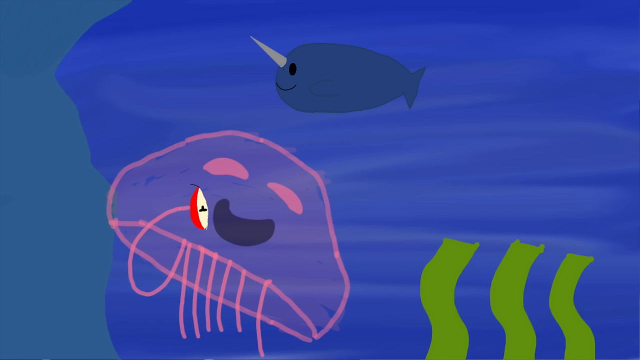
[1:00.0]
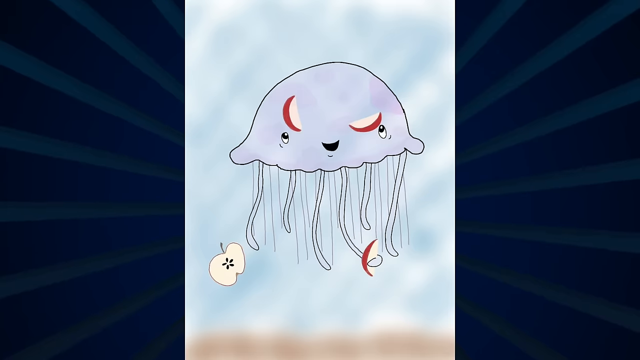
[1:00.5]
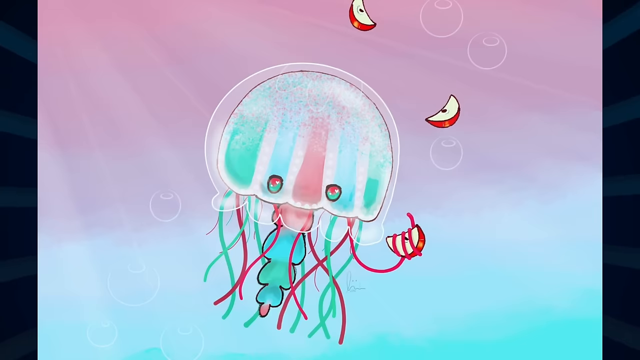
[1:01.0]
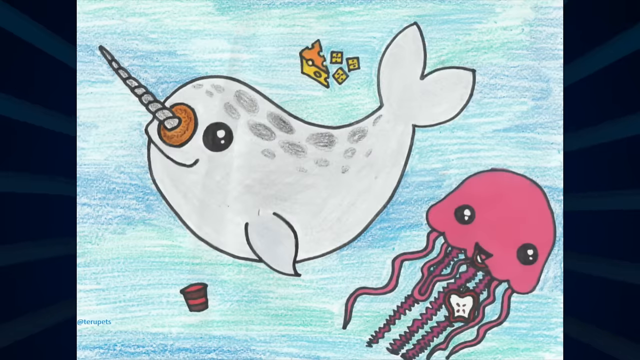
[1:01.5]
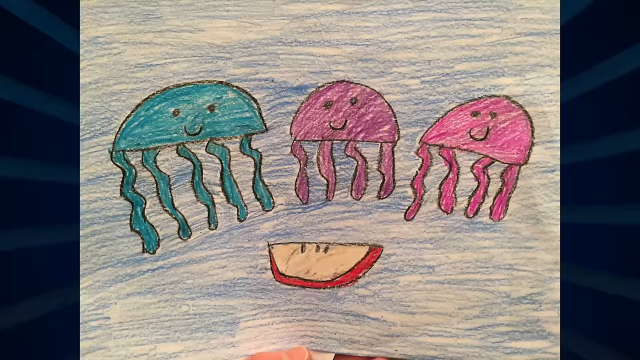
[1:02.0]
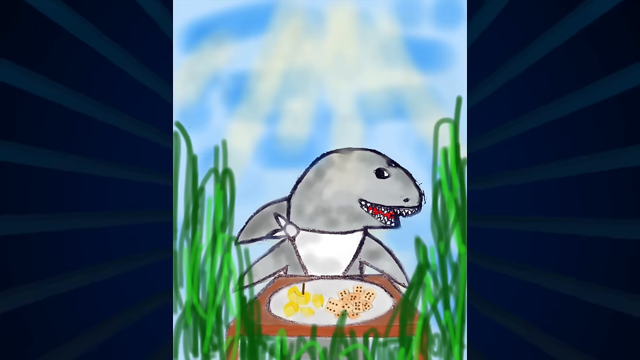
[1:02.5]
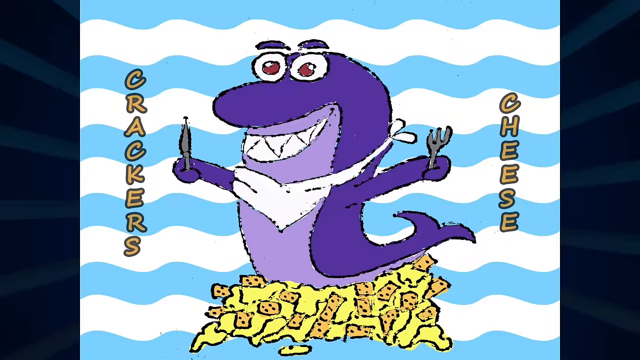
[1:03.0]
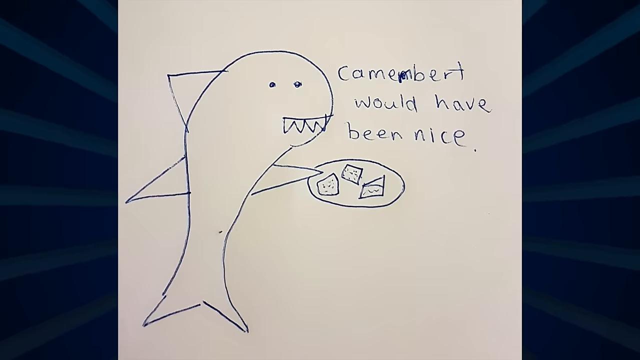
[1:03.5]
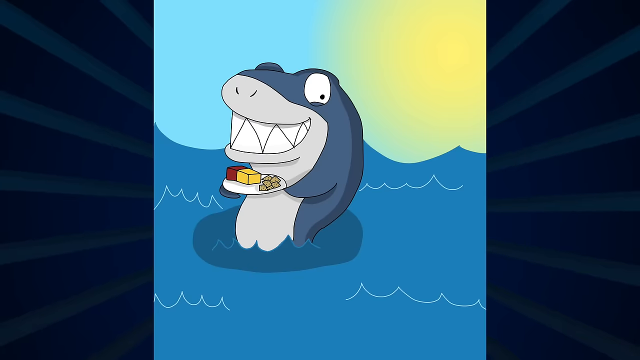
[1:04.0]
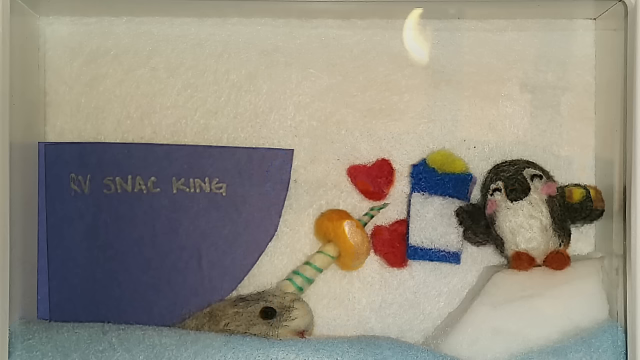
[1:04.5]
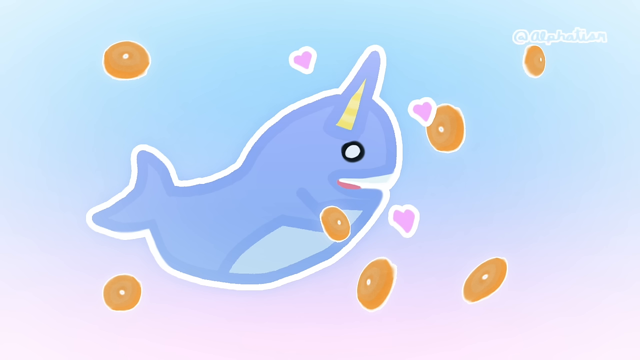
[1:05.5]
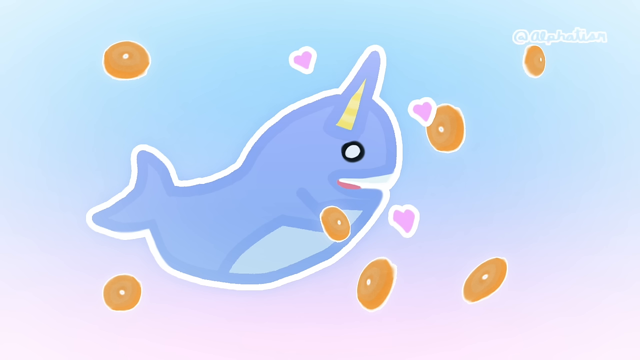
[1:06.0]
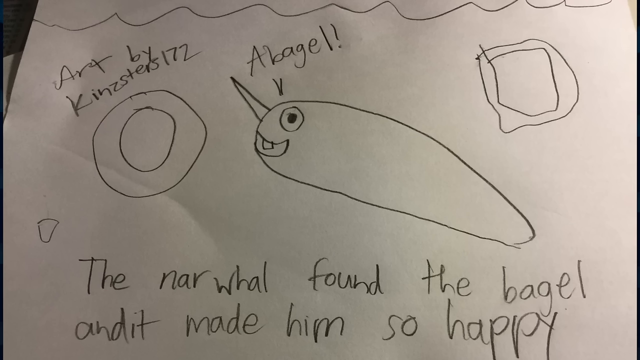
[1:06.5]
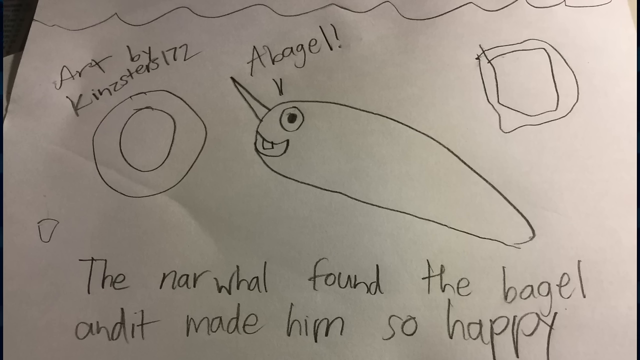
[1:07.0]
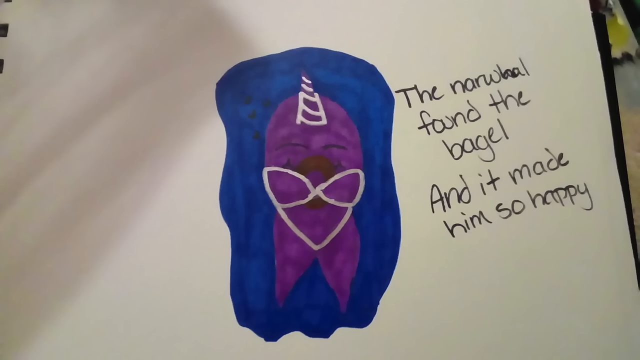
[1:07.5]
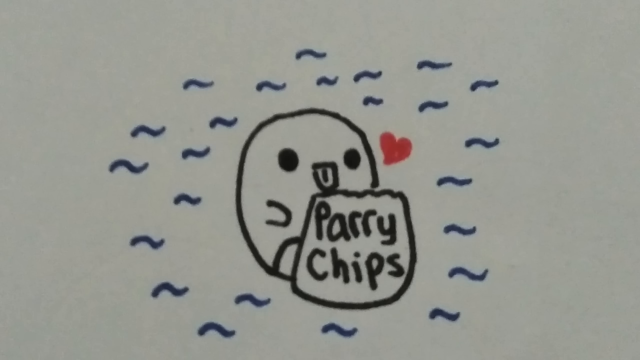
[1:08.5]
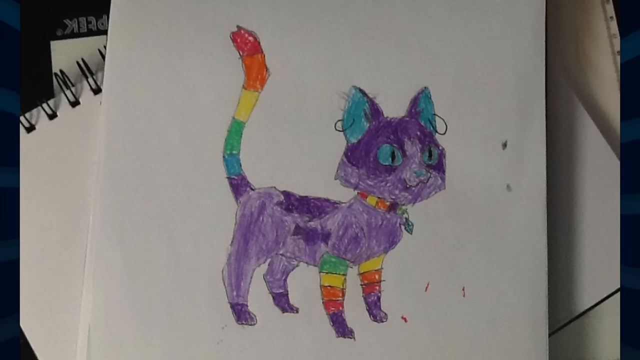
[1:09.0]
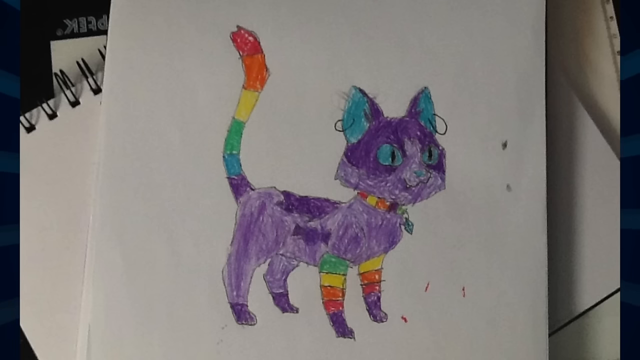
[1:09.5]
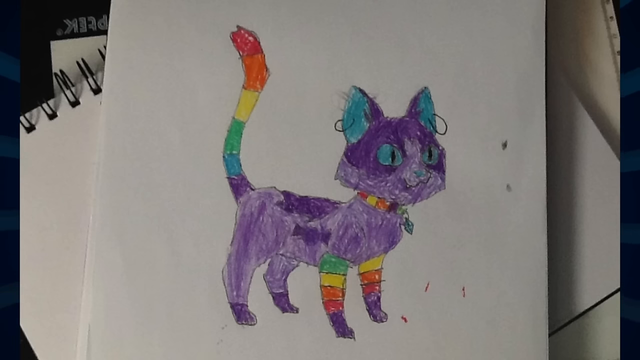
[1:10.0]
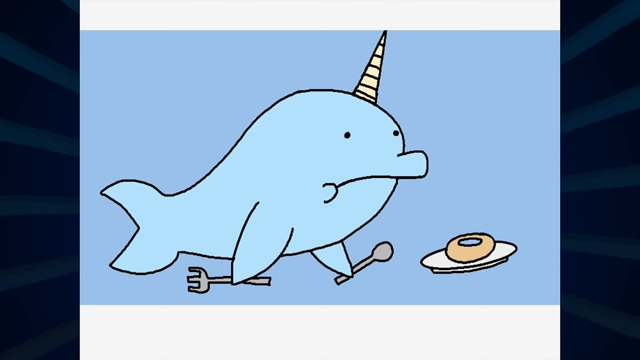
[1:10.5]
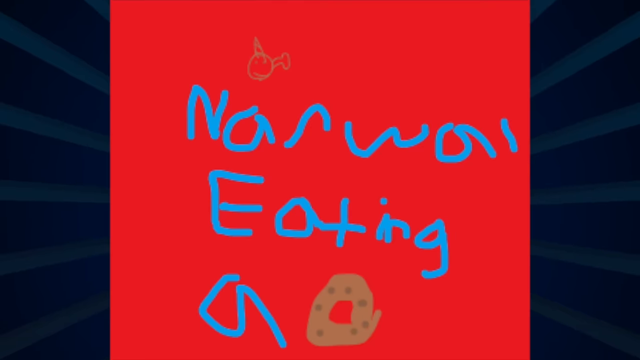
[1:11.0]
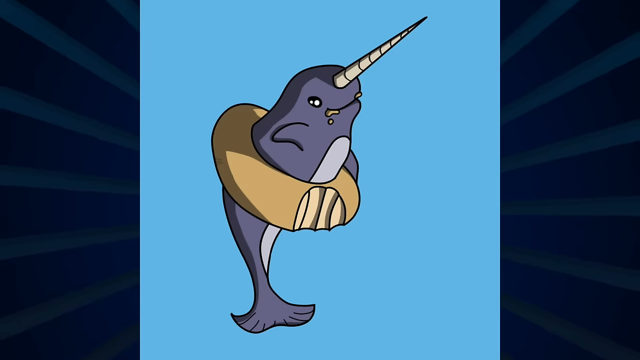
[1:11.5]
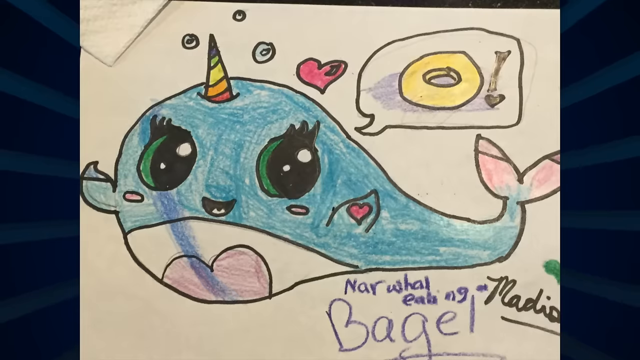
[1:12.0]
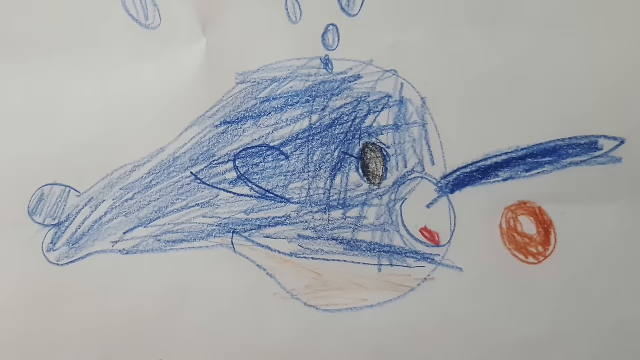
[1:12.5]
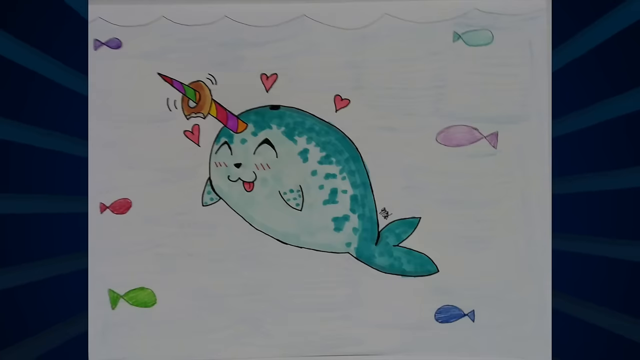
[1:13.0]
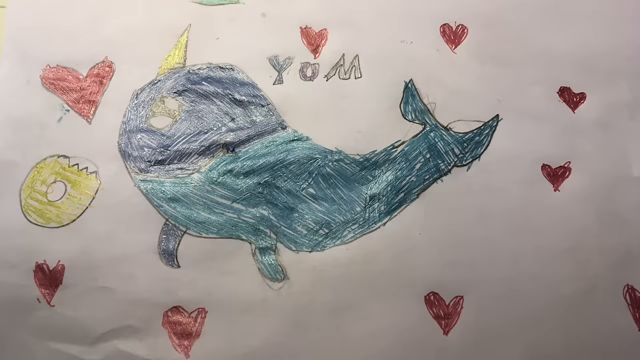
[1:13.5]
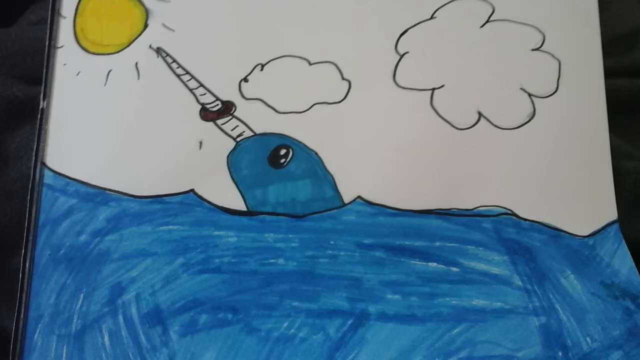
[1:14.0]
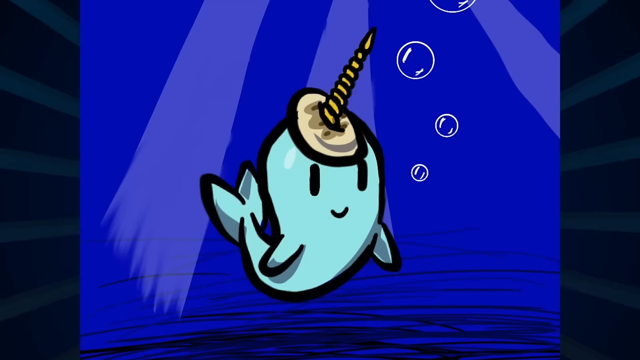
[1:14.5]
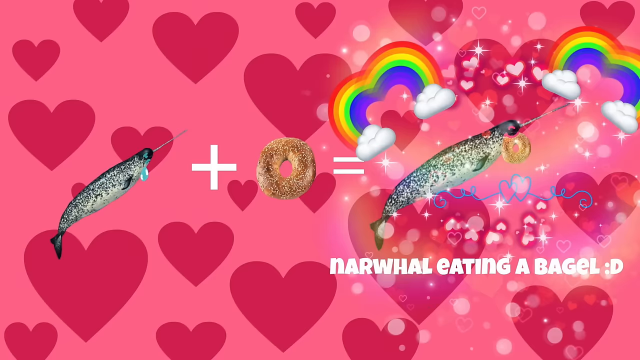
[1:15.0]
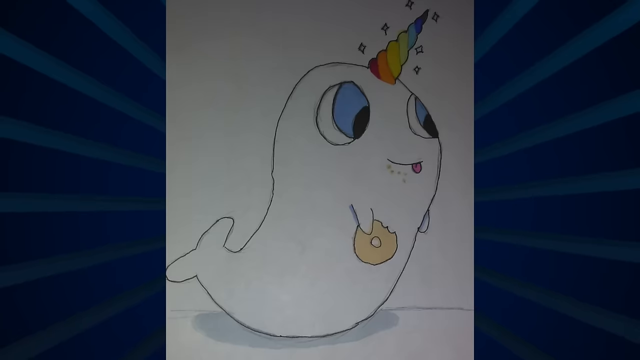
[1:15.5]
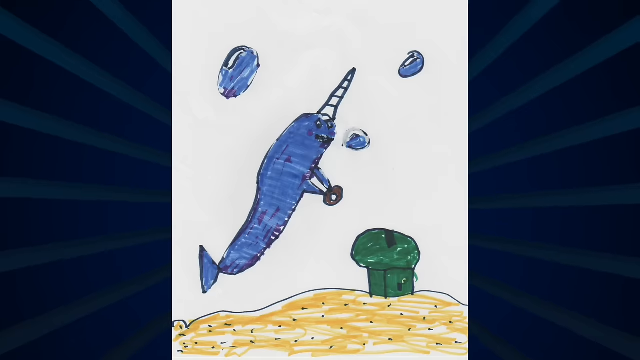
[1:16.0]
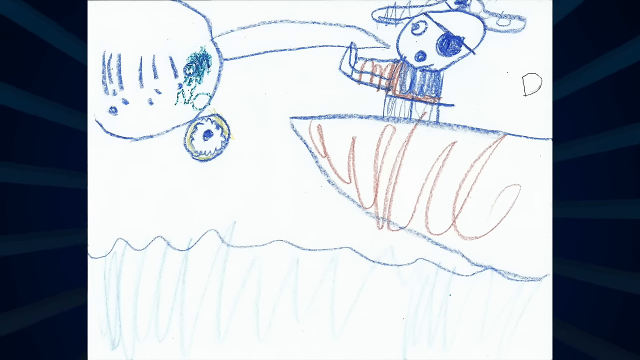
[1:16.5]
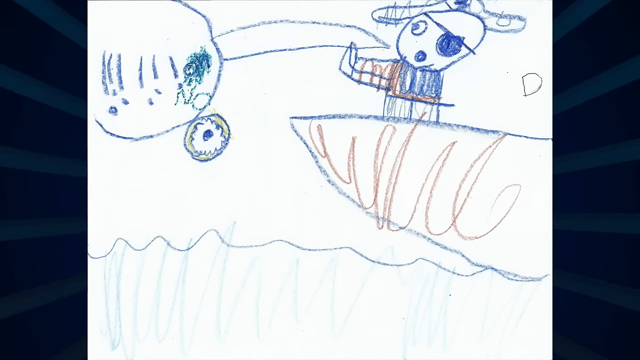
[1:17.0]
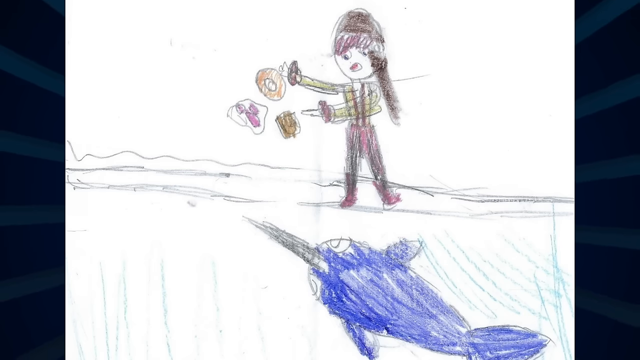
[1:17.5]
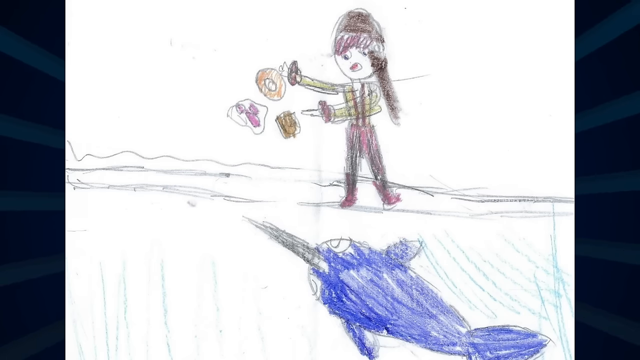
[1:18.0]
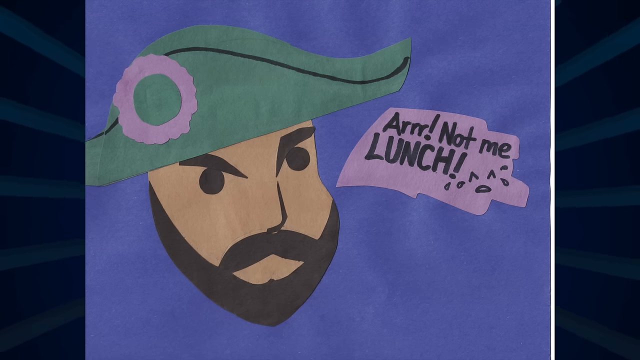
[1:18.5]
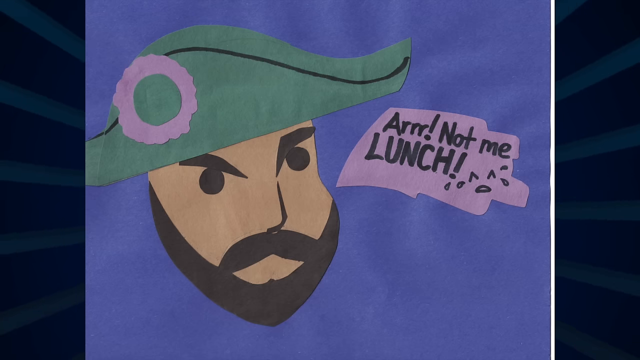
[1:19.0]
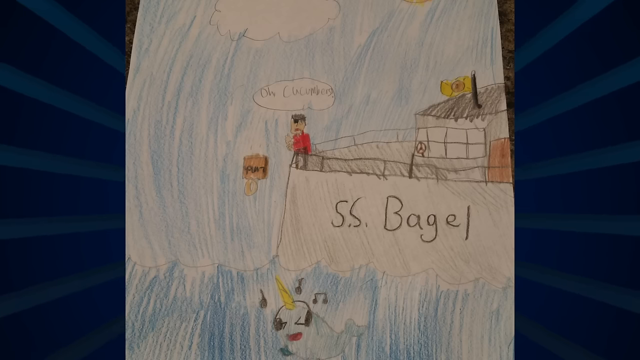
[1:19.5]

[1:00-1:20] The narwhal smiles happily in the ocean, and beneath it a jellyfish eats what appears to be a red apple cut in half. Another picture shows a jellyfish holding multiple apple slices with a happy face. Next, the narwhal has the bagel around its horn, with cheese floating in the water, a pudding cup, and a pink jellyfish eating an apple. The next picture shows three jellyfish happily smiling at a slice of apple. Then a shark with a plate of food smiles happily, showing all its teeth. Another shark sits on top of its food, crackers and cheese, smiling really wide. Multiple pictures show a shark smiling with food. Next, a penguin holds food beside the narwhal with a bagel on its horn. Another picture shows a narwhal feeling love, surrounded by bagels. Another shows a purple cat with blue eyes, rainbow front legs and a rainbow tail. Next, a narwhal is about to eat a bagel with a fork and spoon. One picture shows the narwhal wearing the bagel around its waist. The last few pictures depict fishermen feeding the narwhal bagels from their boats.